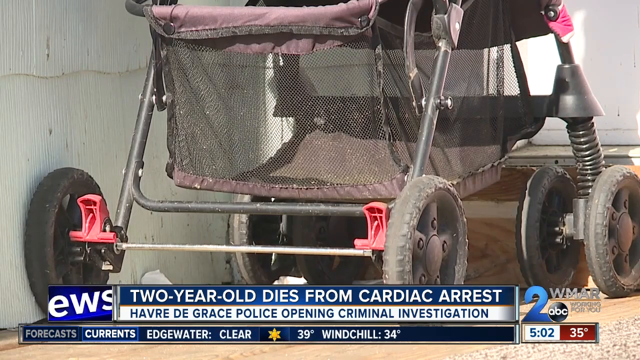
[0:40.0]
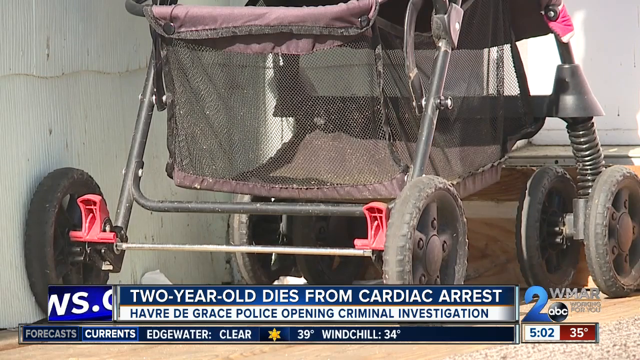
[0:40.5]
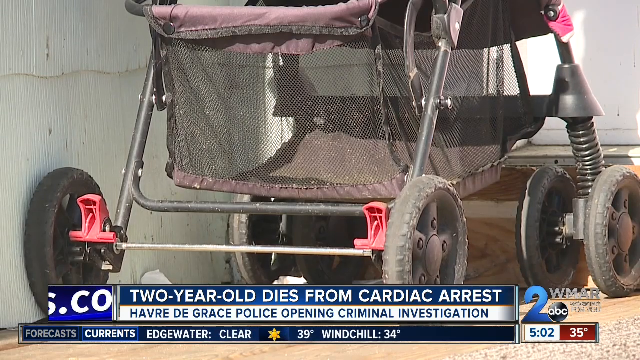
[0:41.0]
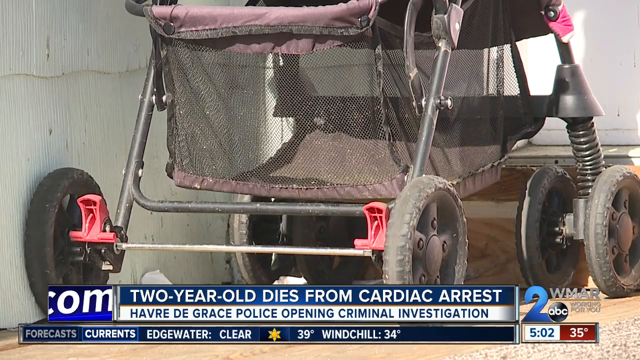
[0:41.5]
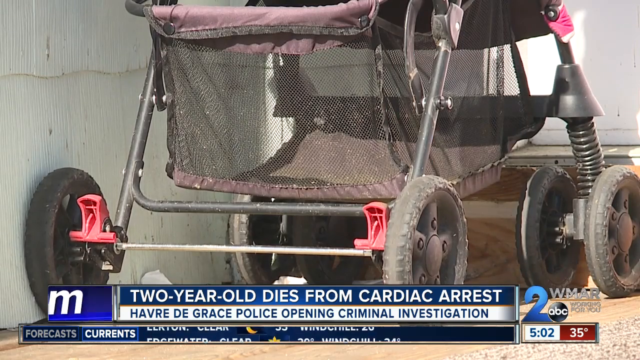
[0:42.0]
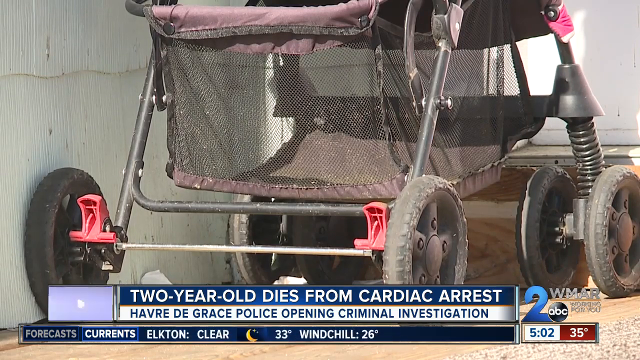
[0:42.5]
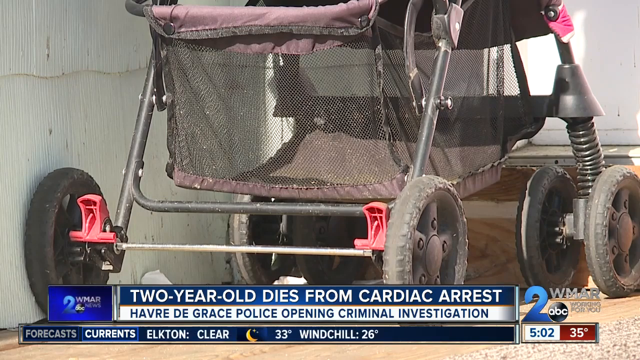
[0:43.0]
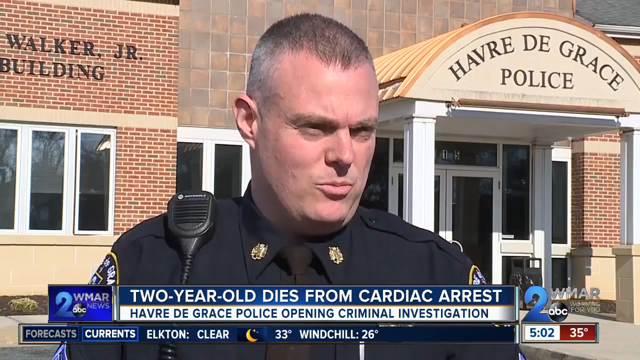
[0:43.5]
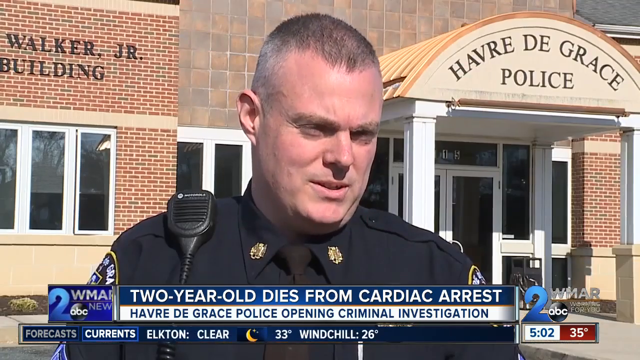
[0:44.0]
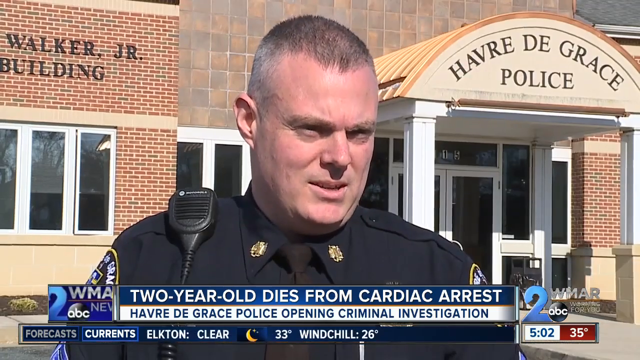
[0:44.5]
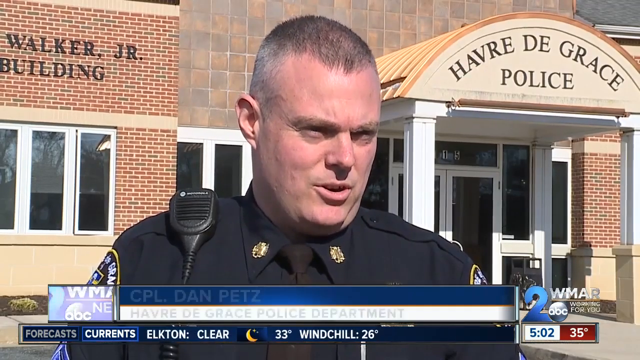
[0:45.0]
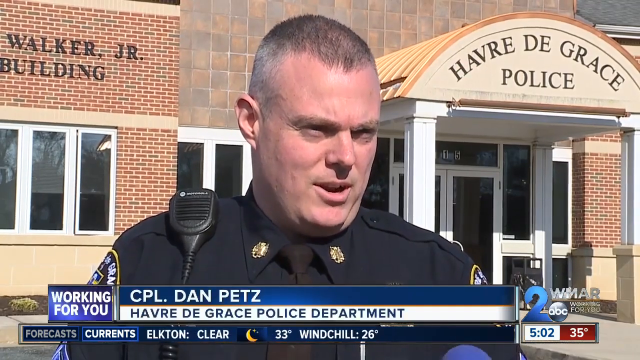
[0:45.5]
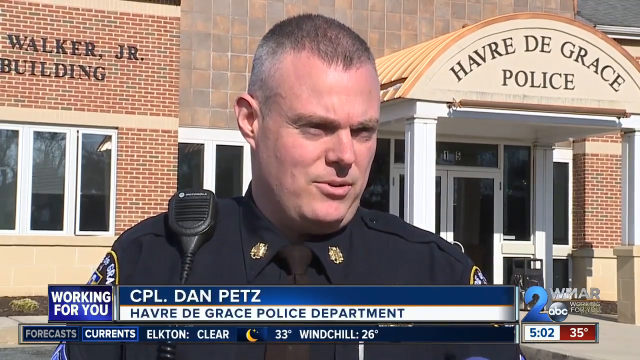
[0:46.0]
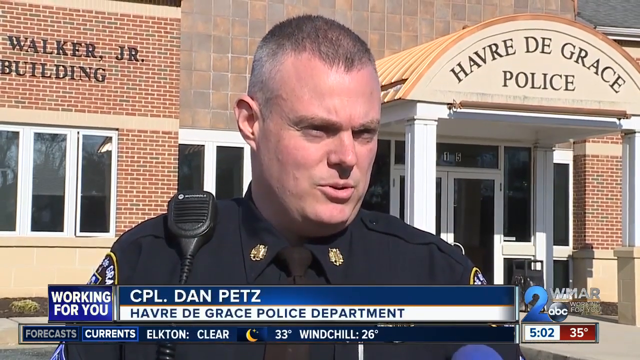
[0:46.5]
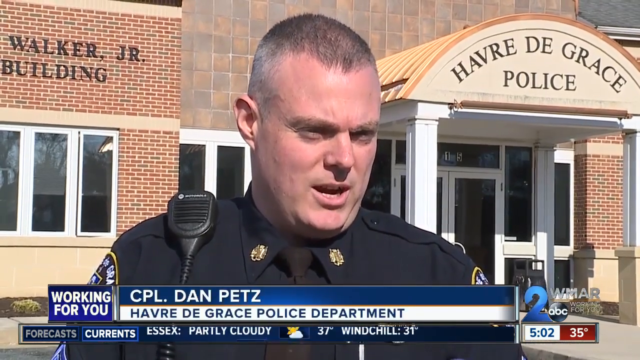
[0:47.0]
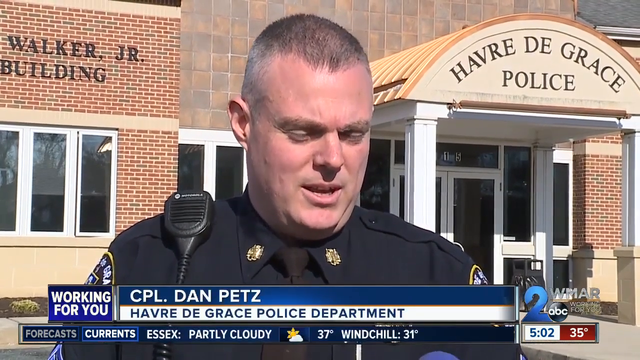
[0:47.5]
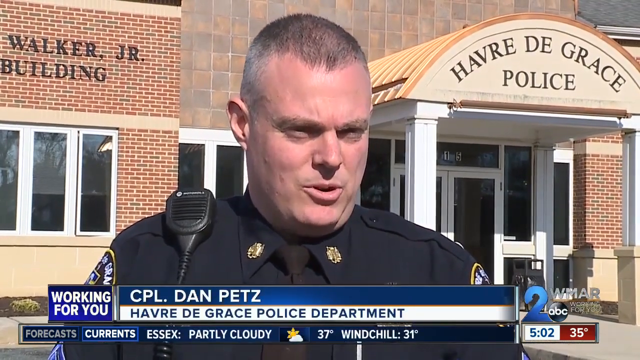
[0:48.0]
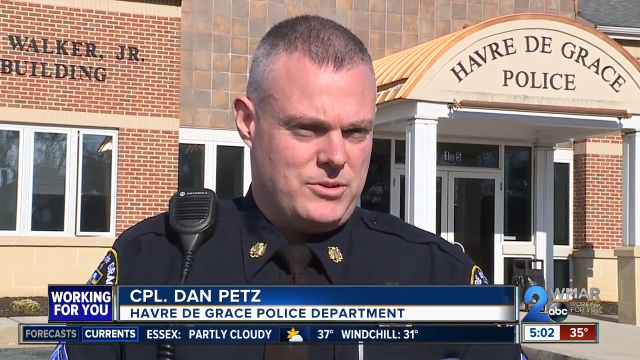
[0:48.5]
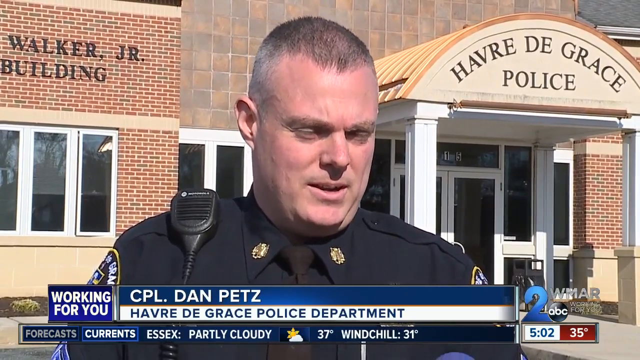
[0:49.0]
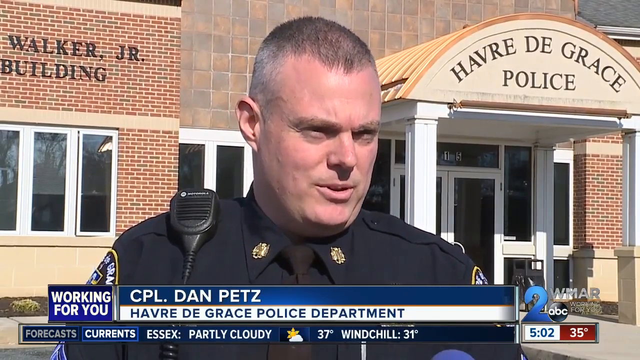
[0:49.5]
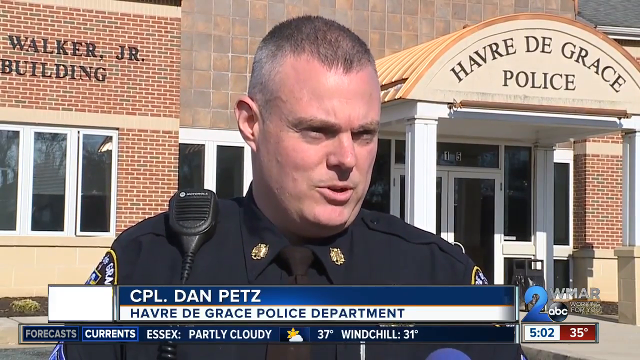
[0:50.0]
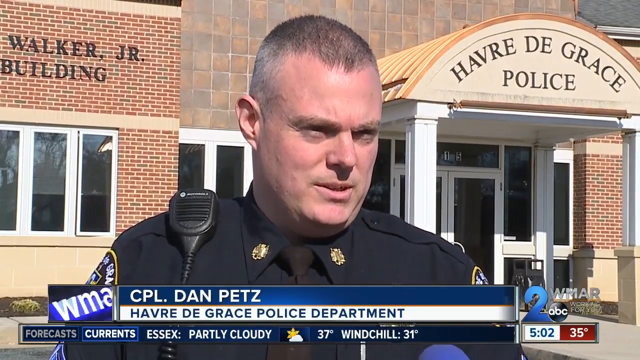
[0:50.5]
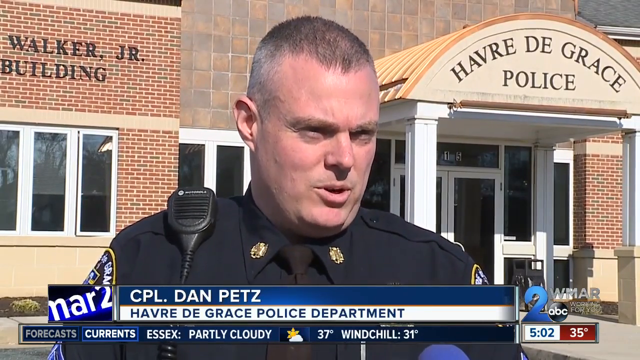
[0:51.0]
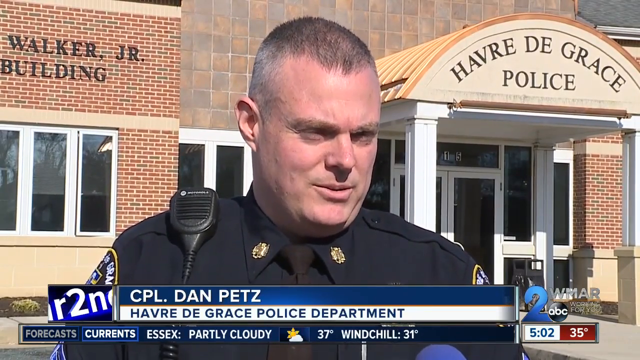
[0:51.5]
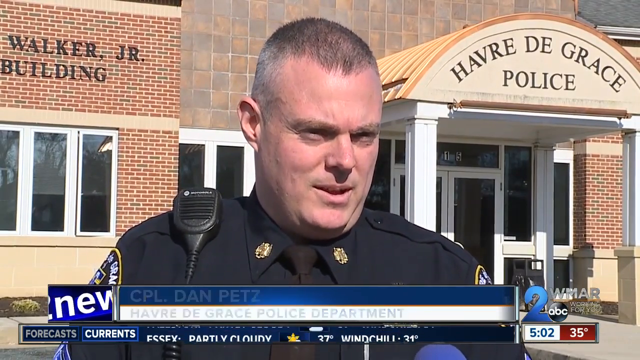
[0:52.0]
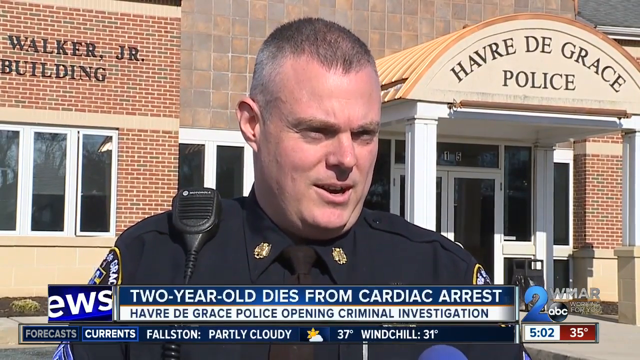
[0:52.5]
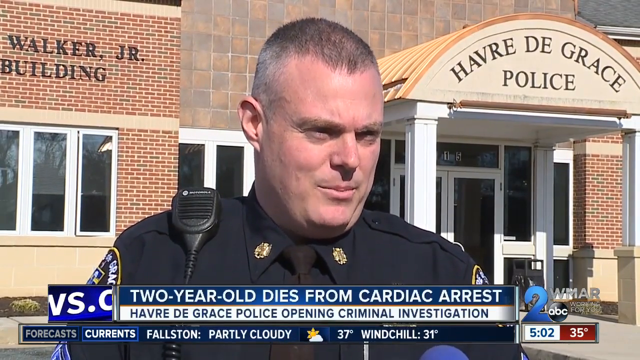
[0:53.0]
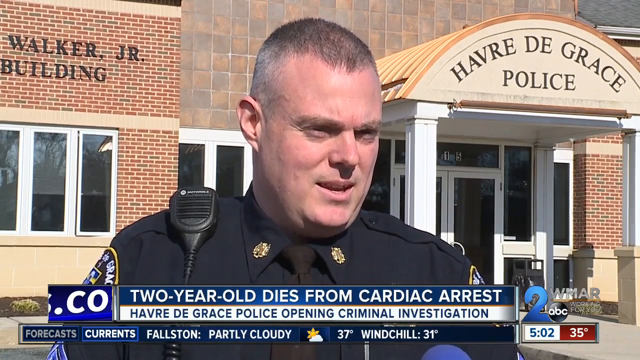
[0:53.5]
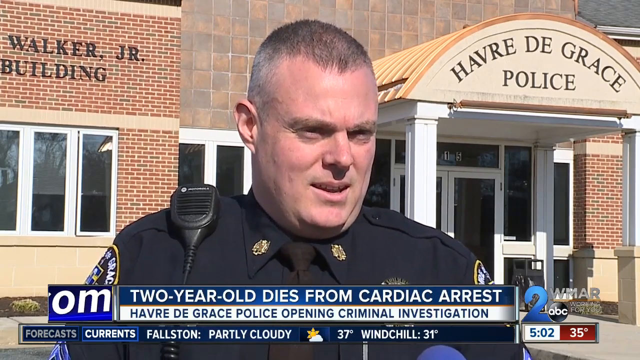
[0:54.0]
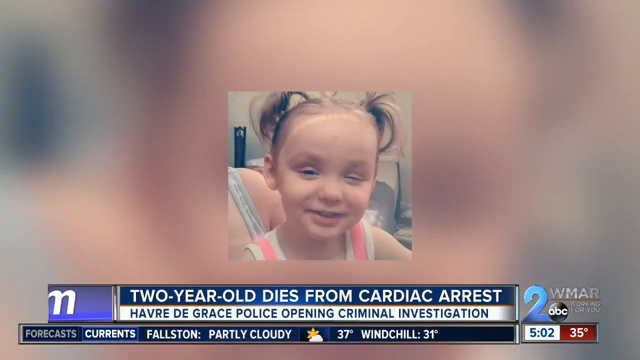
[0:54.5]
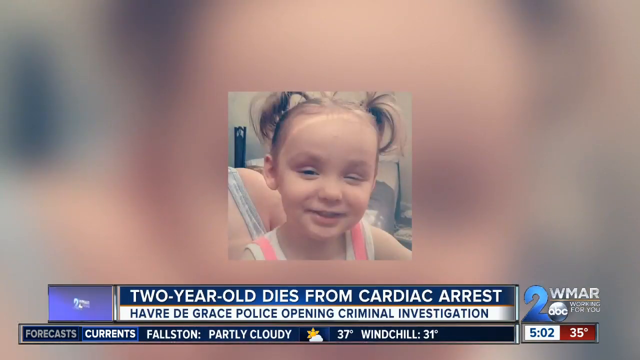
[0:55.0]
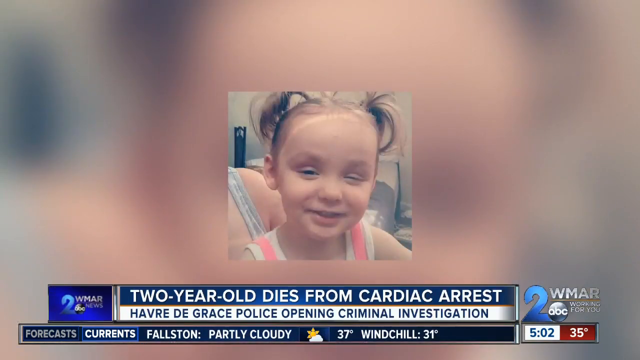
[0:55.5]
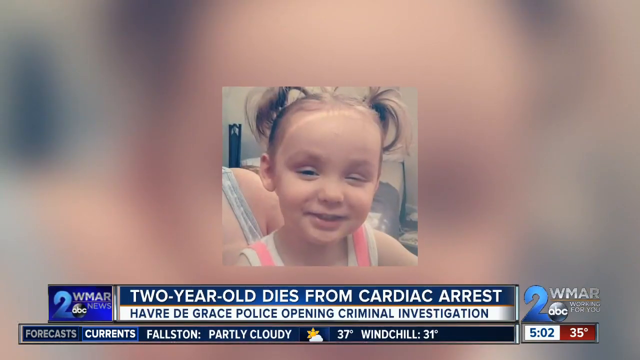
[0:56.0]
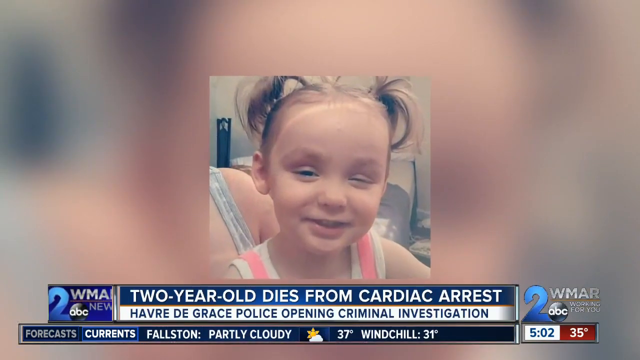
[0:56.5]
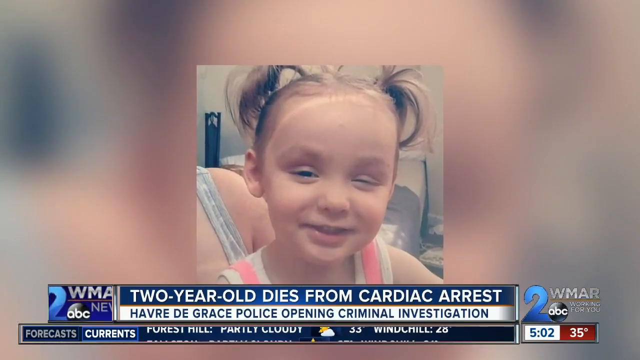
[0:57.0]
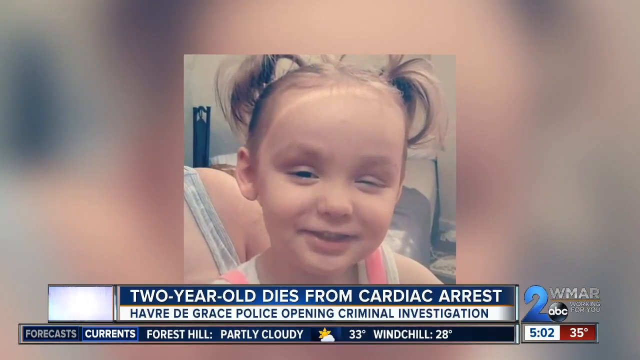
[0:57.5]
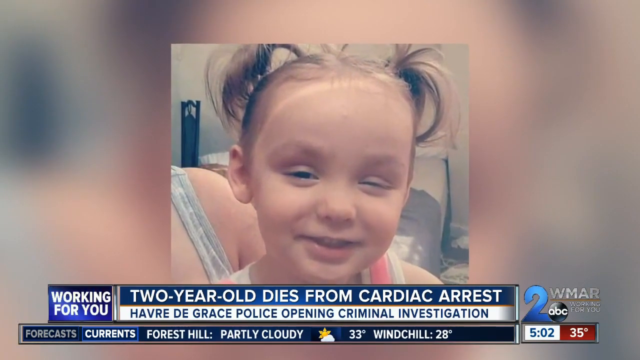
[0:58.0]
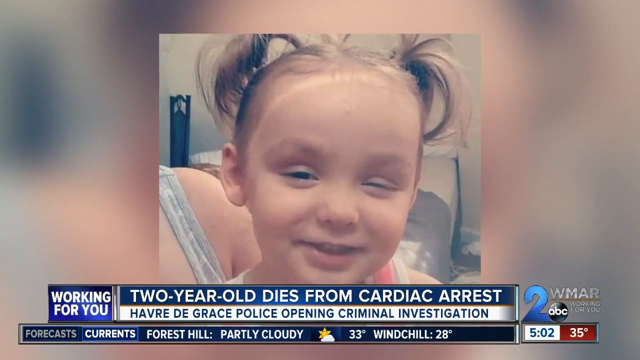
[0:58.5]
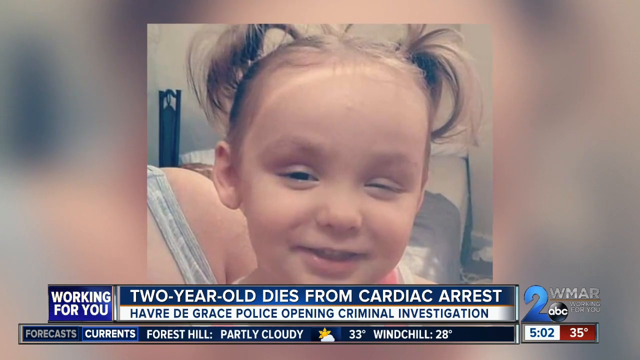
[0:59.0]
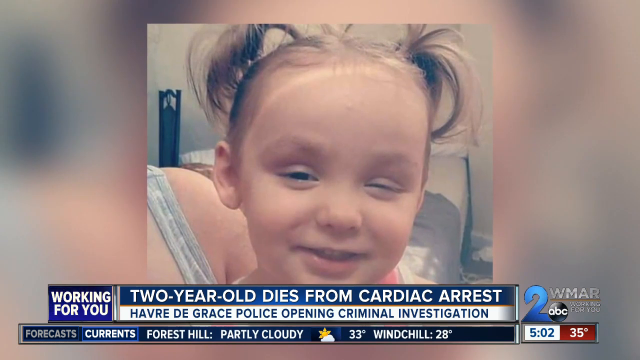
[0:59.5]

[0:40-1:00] The Channel 2 News ABC segment continues with the text "two year old dies from cardiac arrest" and "Harvey Day Grace police opening criminal investigation." A small baby stroller is outside, apparently by the apartments or the house where the little girl lived. Weather scrolls at the bottom of the screen. Text then reads "Captain Dan Petz" and "Harvey Day Grace Police Department"; the man is outside the police department, apparently talking about the matter, and it is sunny outside. He looks middle-aged, maybe in his 30s or early 40s. The caption "two-year-old dies from cardiac arrest" and the note about police opening a criminal investigation stay on screen, and another picture of the little girl who died is shown.